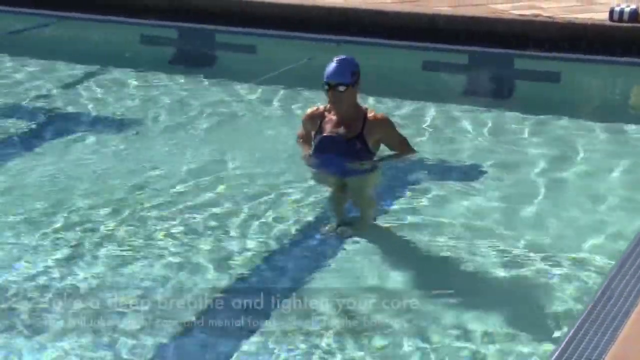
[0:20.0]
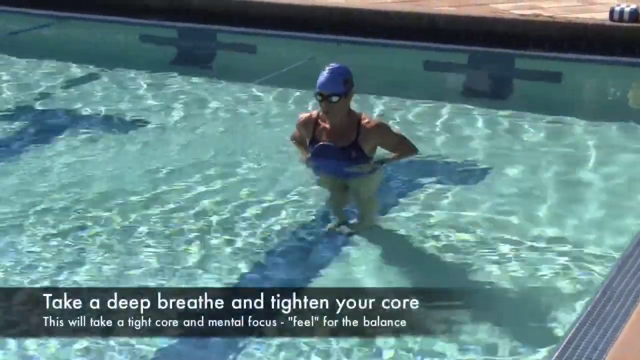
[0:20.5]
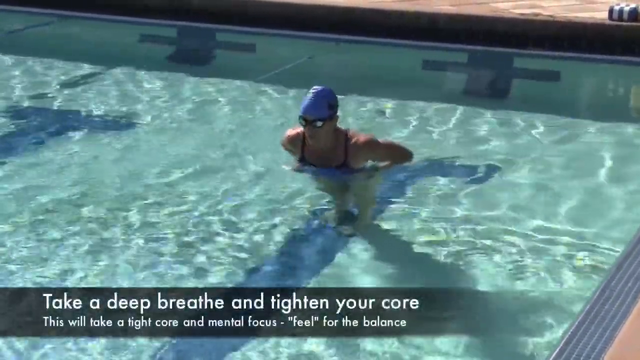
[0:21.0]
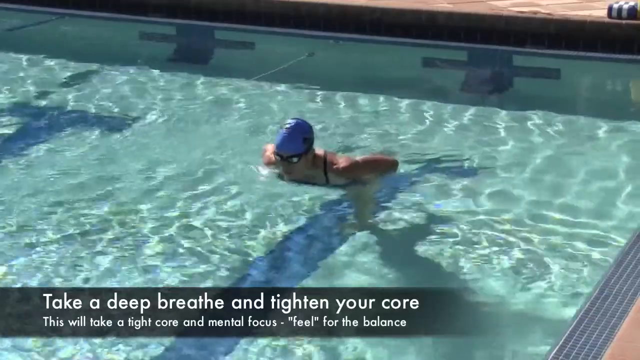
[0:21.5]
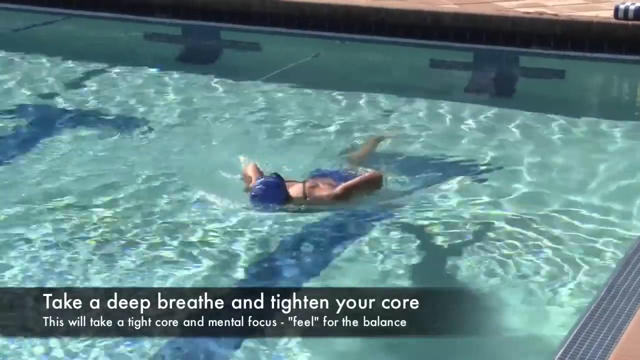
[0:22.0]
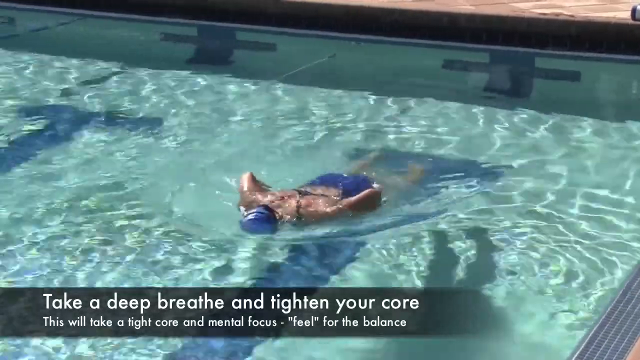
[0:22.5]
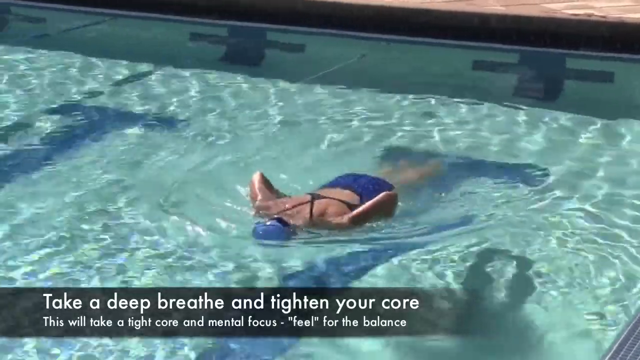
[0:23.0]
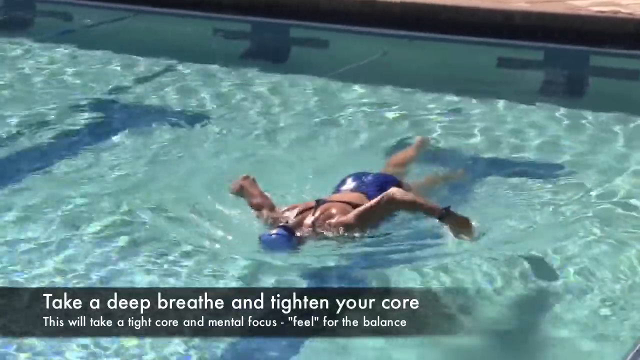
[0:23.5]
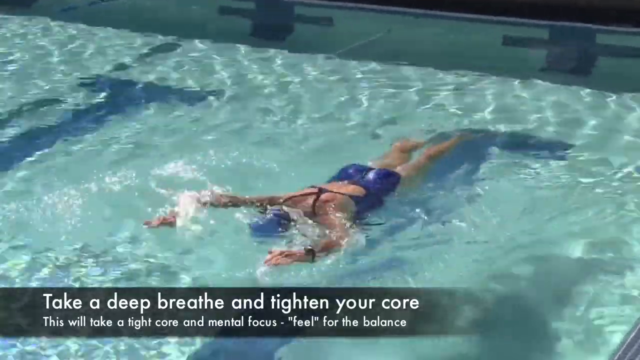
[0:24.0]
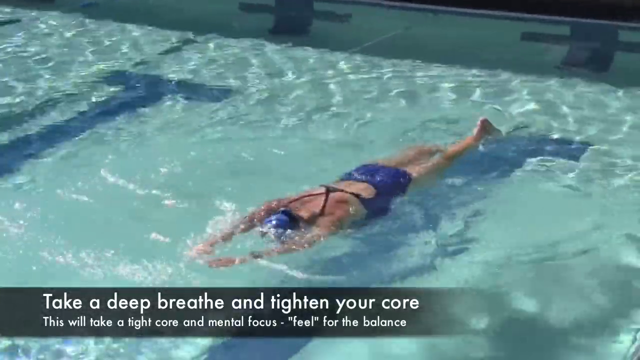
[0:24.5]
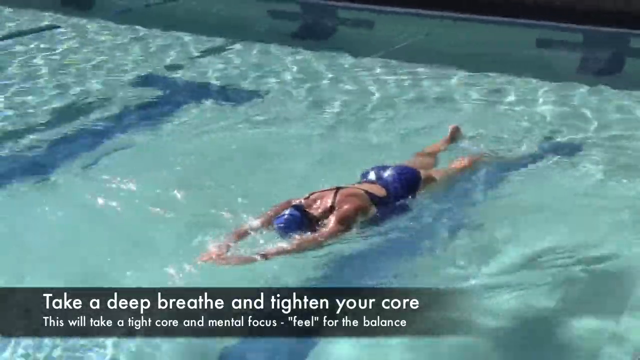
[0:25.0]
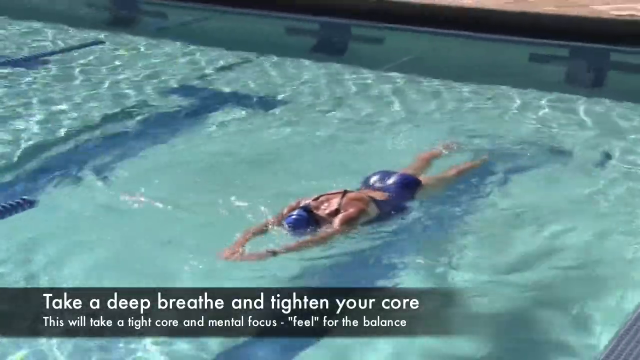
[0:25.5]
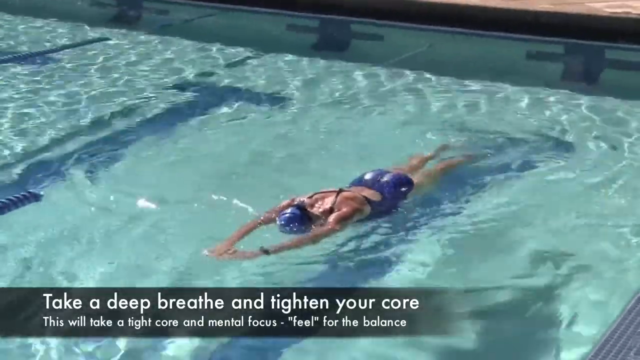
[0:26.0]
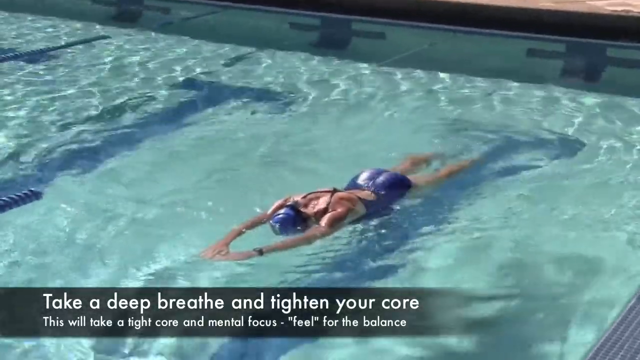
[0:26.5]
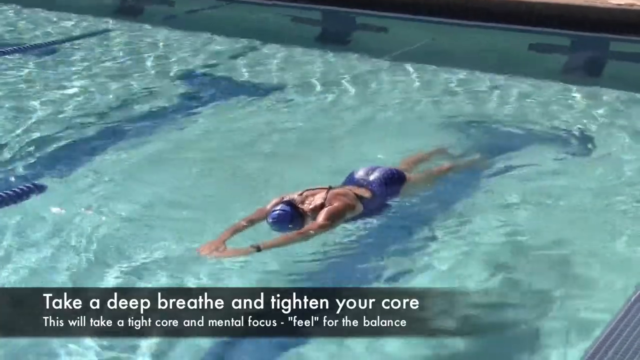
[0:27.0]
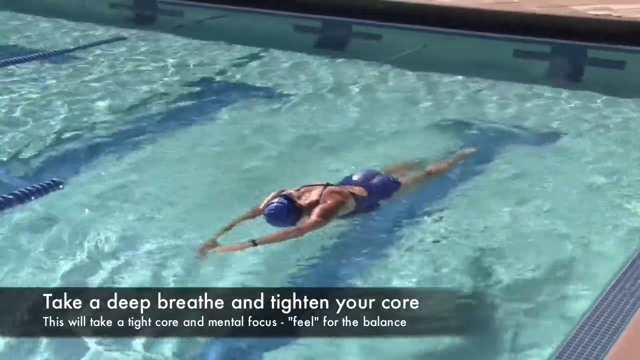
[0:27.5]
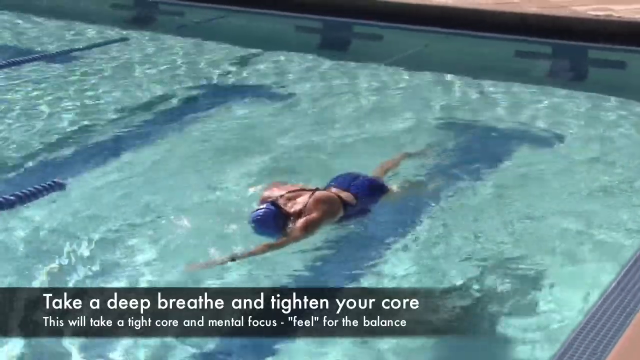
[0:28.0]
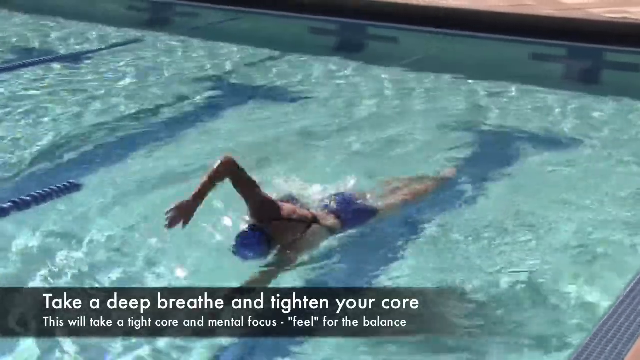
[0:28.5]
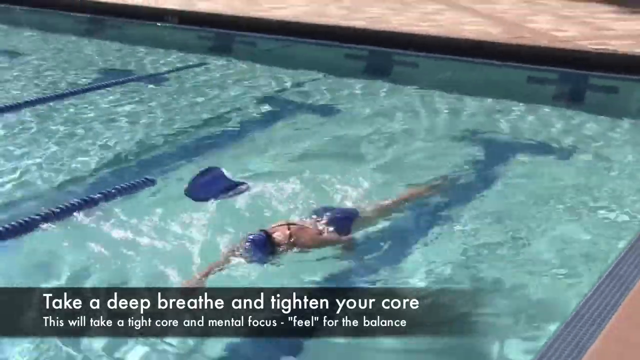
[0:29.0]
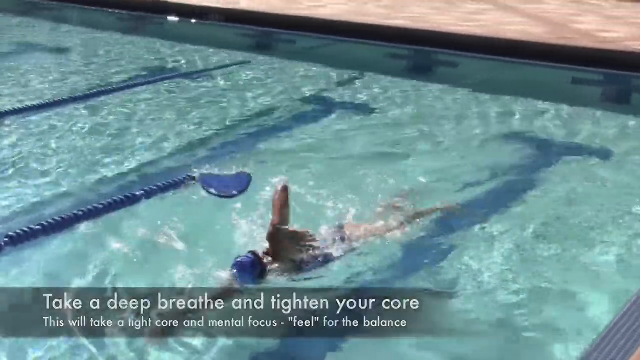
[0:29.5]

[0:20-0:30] The device is an assistive kit. After a few tries the person throws the device away and starts swimming. Text appears reading "take a deep breath and tighten your core", "this will take a tight core and maintain focus" and "feel for the balance".